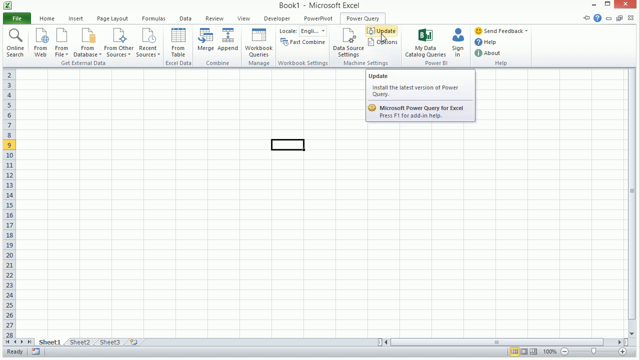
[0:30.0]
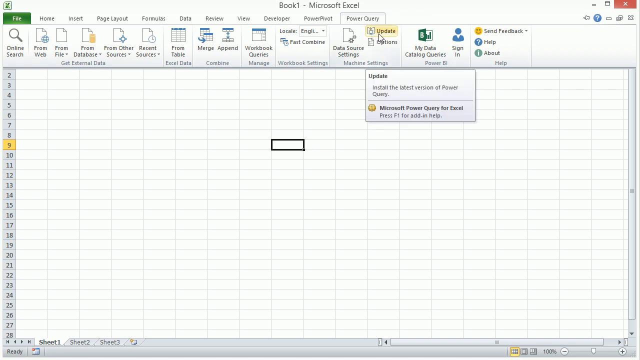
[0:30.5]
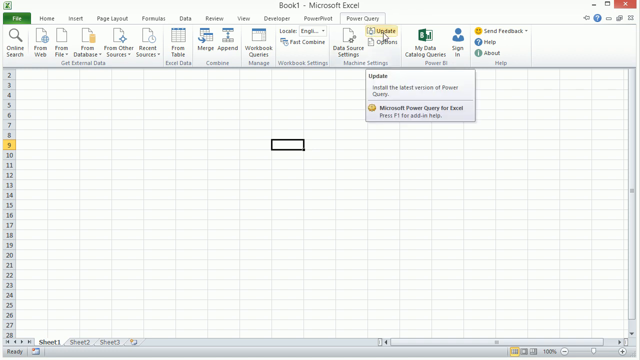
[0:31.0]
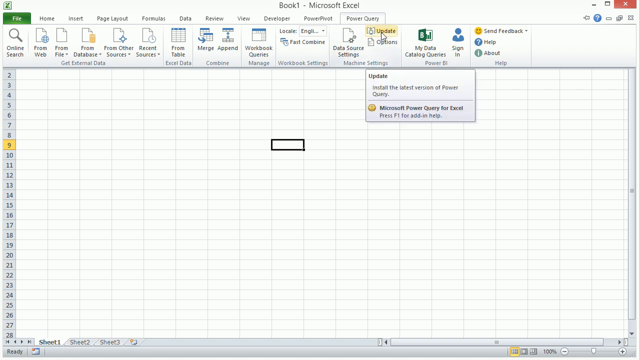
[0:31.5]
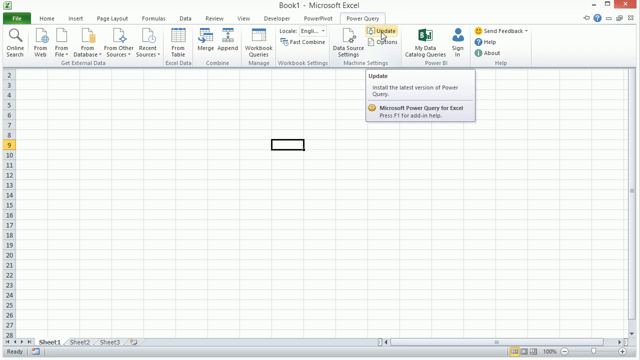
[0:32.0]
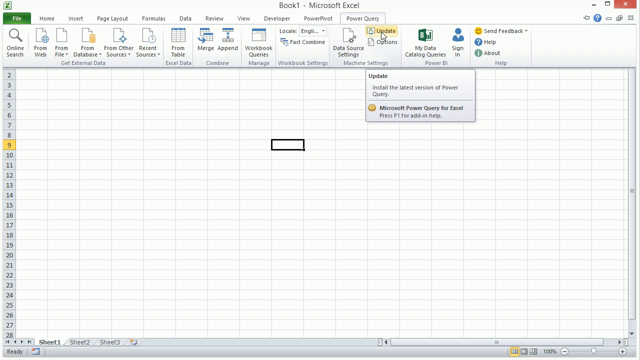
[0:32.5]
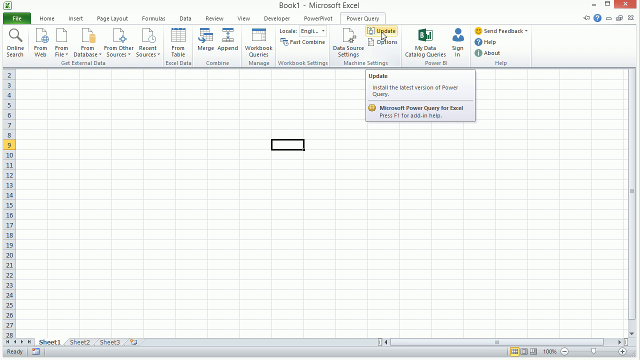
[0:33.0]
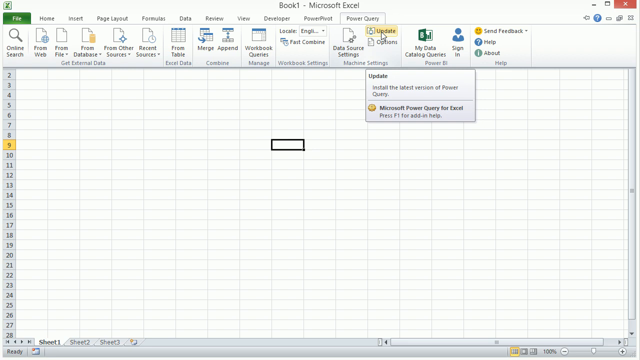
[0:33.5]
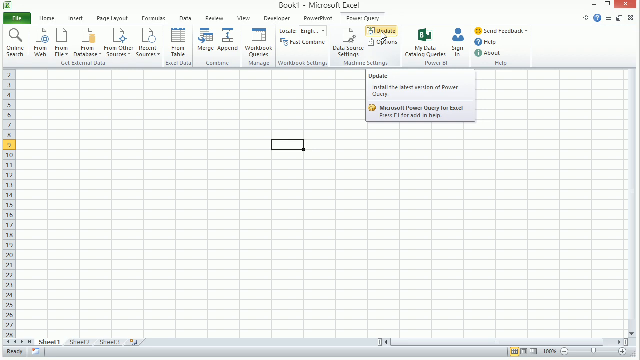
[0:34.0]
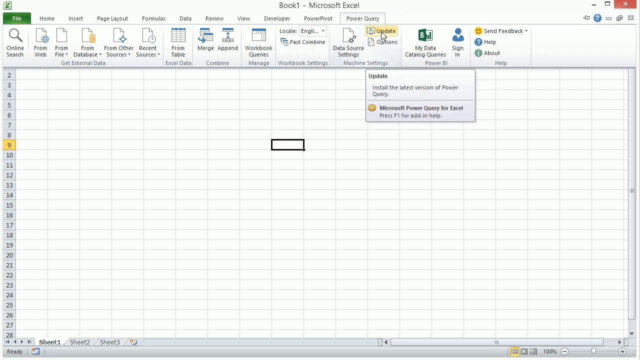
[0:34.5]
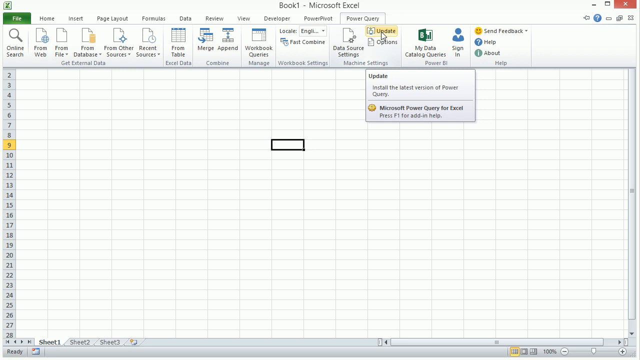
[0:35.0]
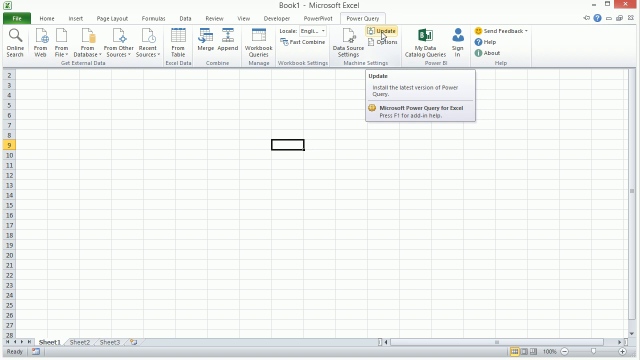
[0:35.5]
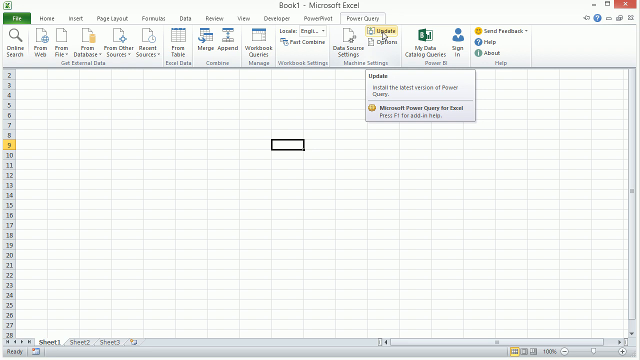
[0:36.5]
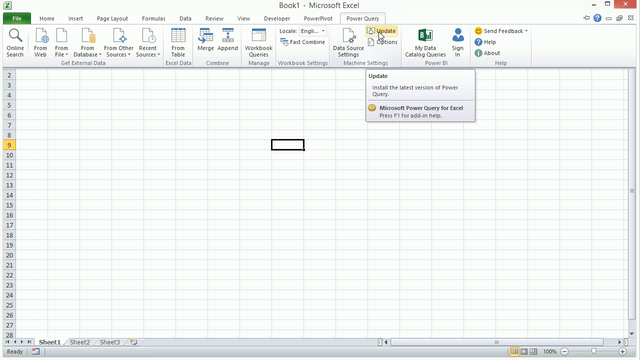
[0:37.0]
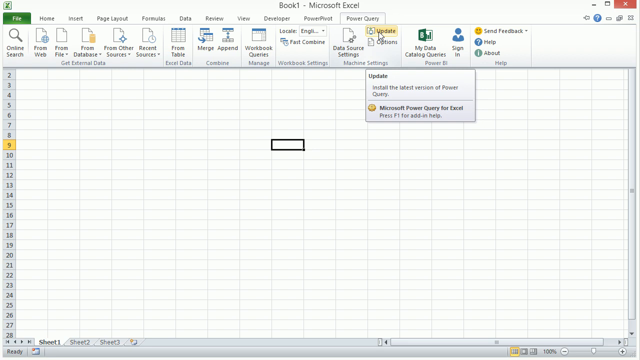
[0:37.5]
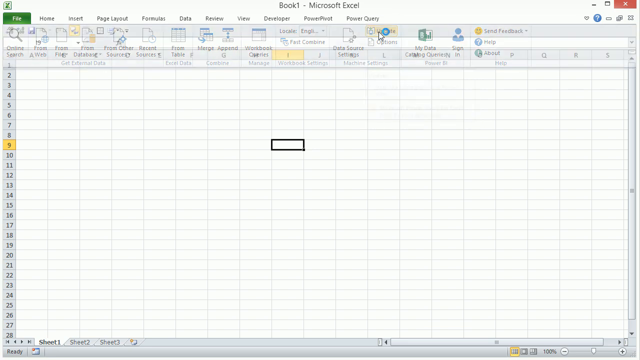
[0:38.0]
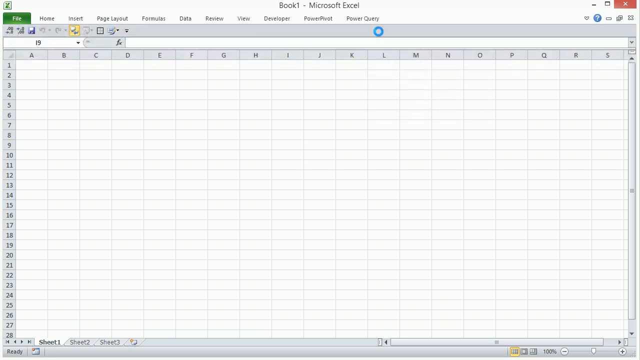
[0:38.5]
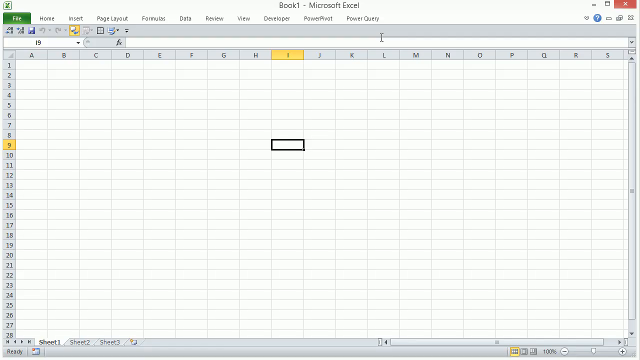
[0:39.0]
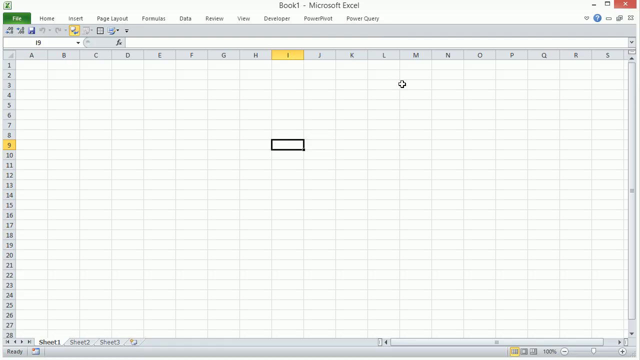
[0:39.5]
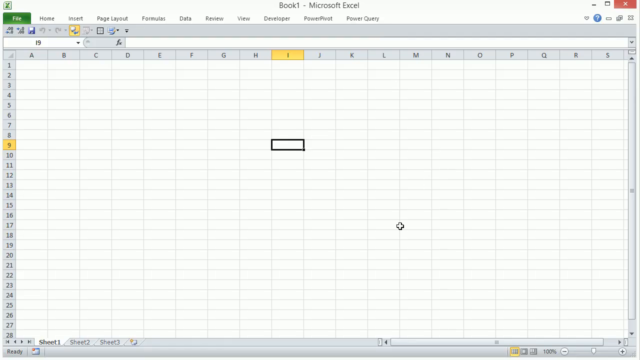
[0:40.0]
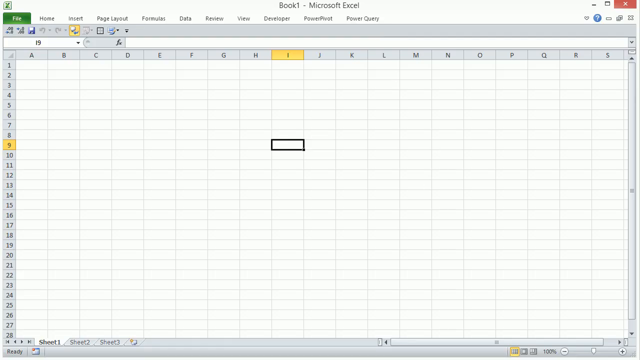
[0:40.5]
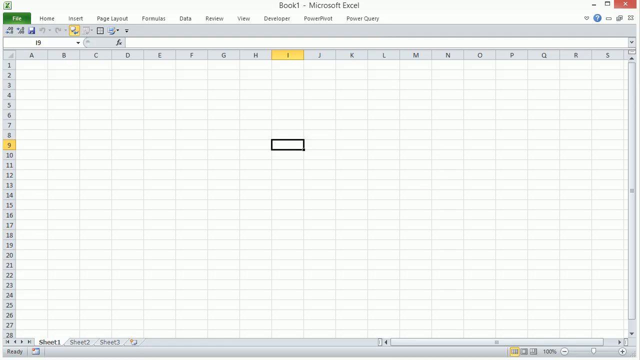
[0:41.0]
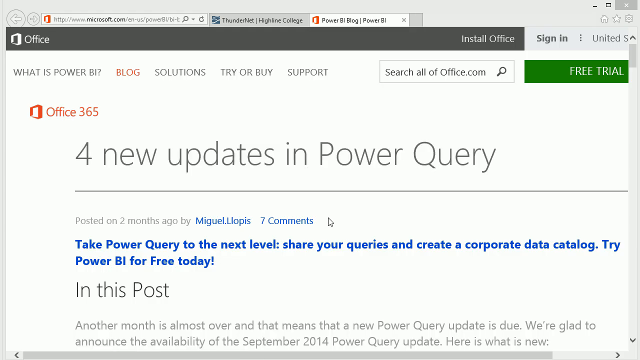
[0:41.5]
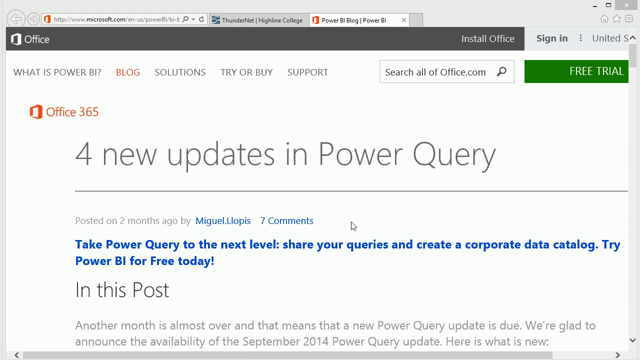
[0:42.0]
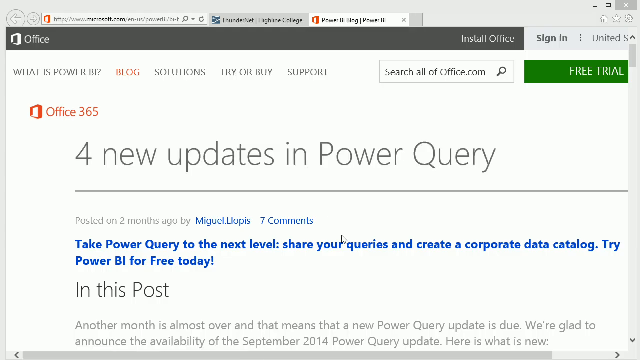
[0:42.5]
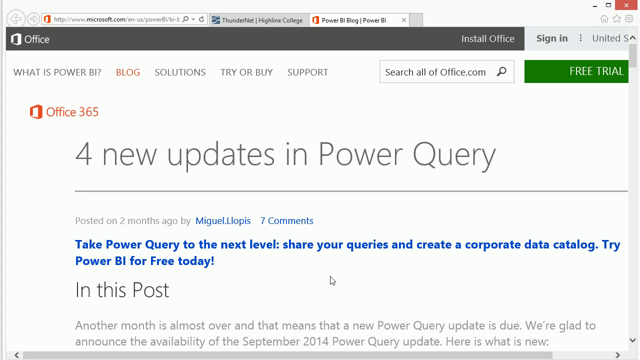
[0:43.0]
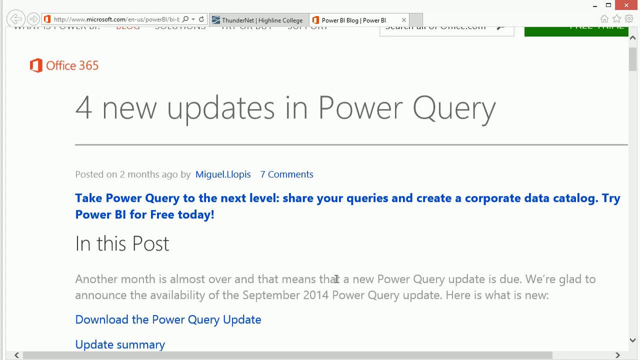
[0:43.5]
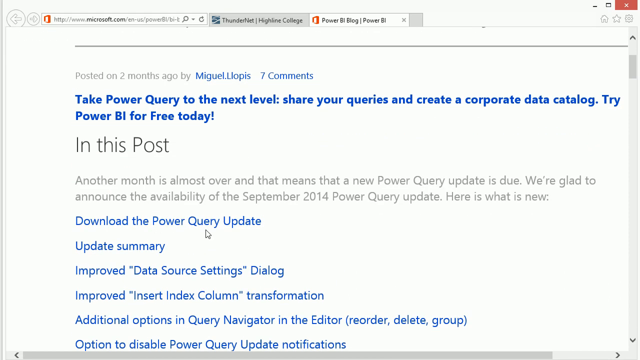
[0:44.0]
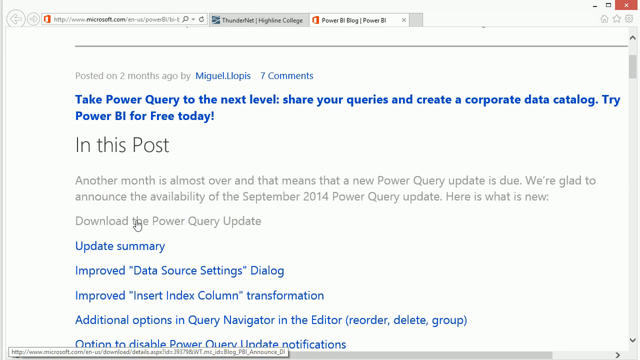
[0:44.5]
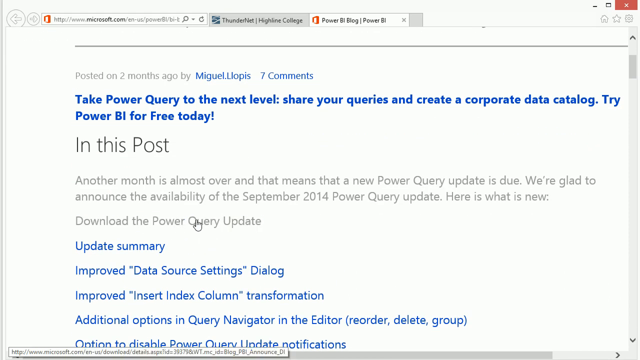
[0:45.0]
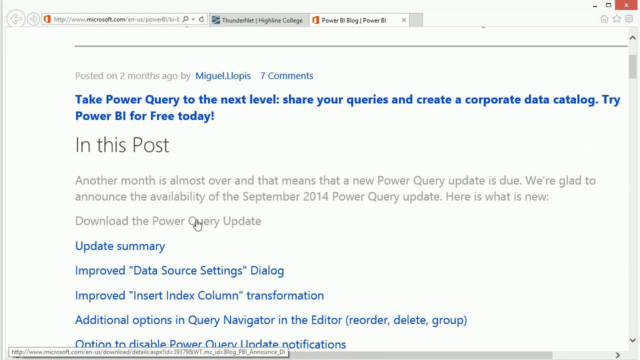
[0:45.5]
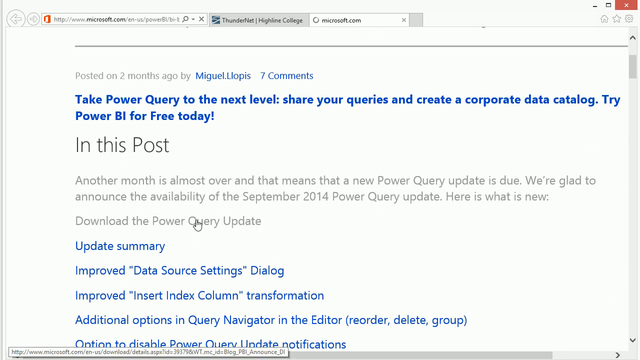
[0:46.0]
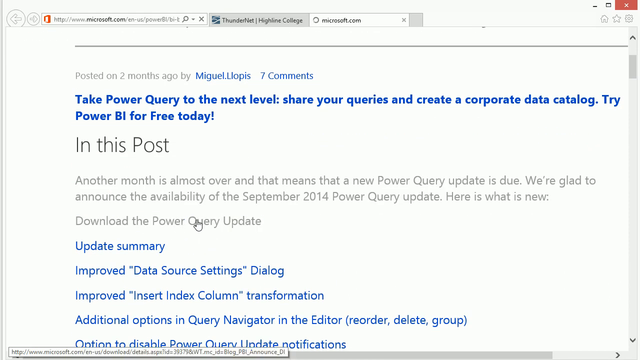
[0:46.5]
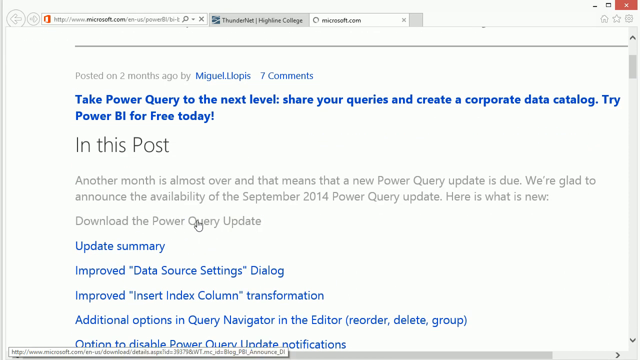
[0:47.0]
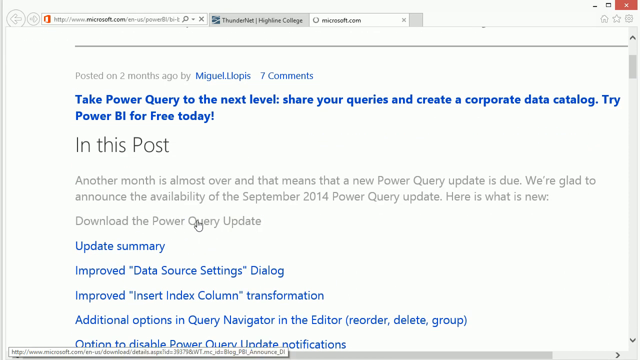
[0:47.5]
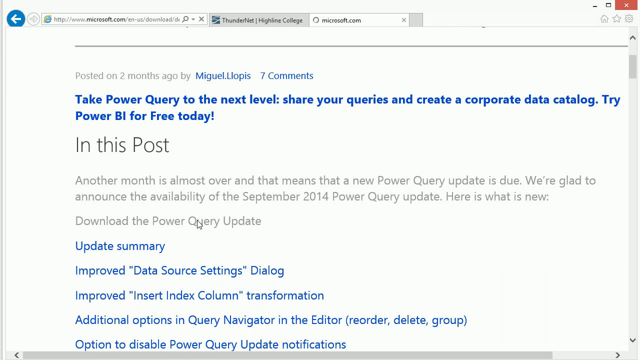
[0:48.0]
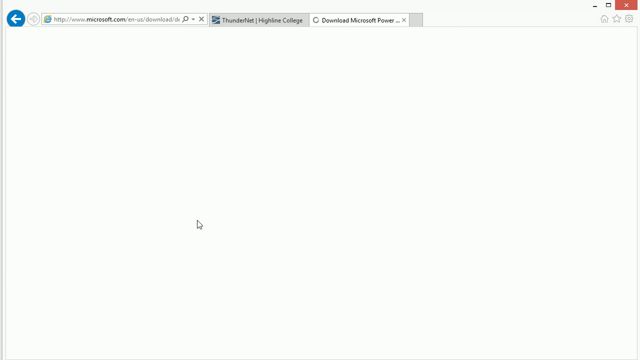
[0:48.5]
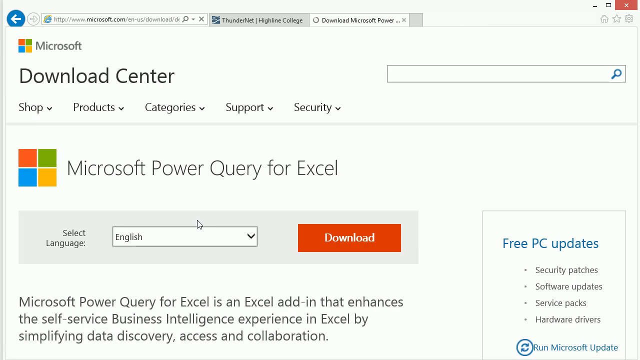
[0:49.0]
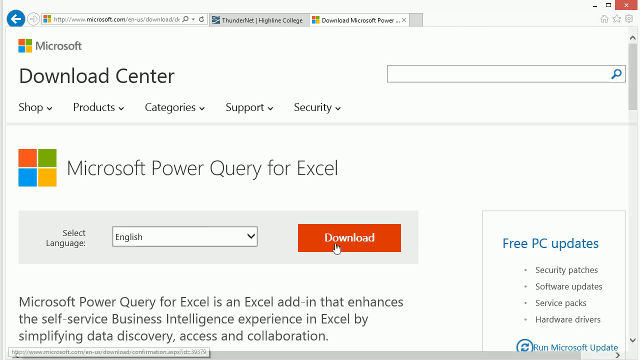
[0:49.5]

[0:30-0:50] The view is still under the Power Query tab's Update option, with the user hovering over it. He clicks Update, which returns to the Excel page with the top selections gone. He appears to have hit Help or something similar, because an internet page opens with "Office 365" in the top left corner. One other browser tab is open, labeled "Thundernet Highline College." The page's heading reads "four new updates in Power Query," posted two months ago by Miguel Lopez. It says "Take Power Query to the next level. Share your queries and create a corporate data catalog. Try Power BI for free today." Below that it reads "In this post, another month is almost over, and that means that a new Power Query update is due. We're glad to announce the availability of the September 2014 Power Query update. Here's what is new." A few links follow, including one to download the summary.